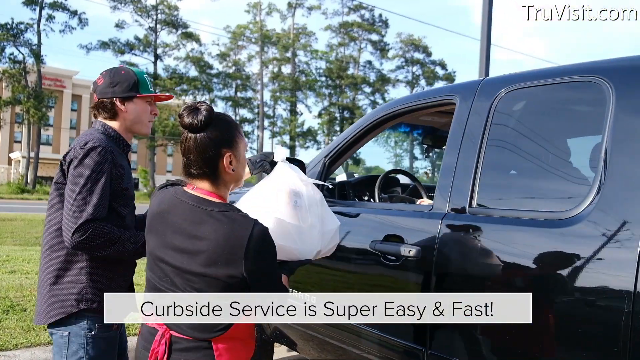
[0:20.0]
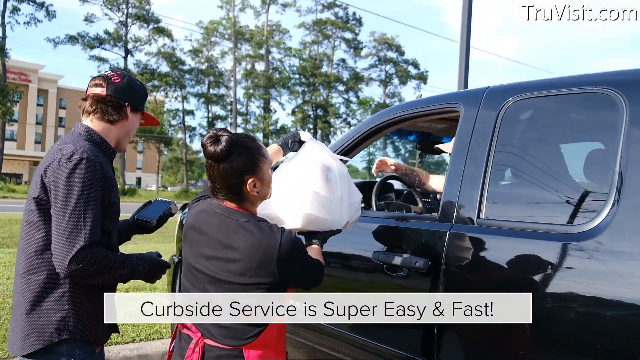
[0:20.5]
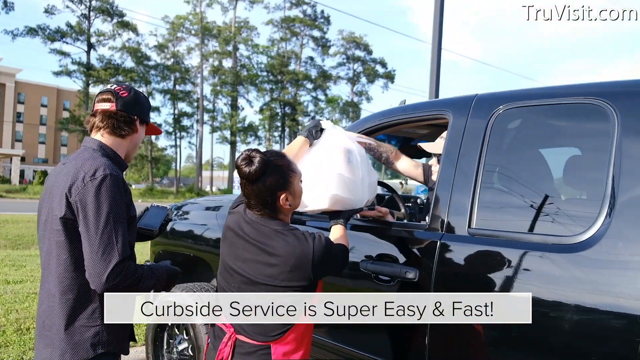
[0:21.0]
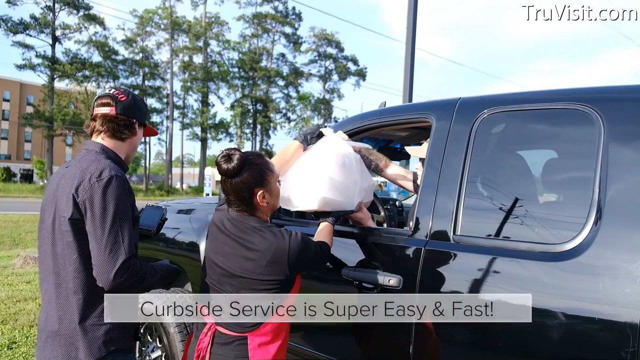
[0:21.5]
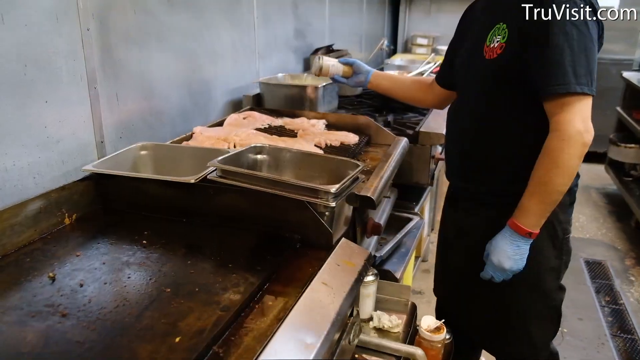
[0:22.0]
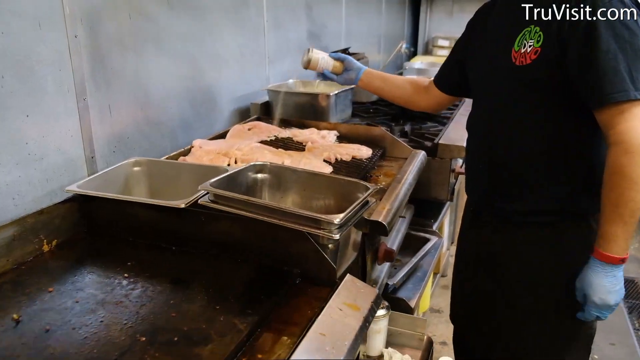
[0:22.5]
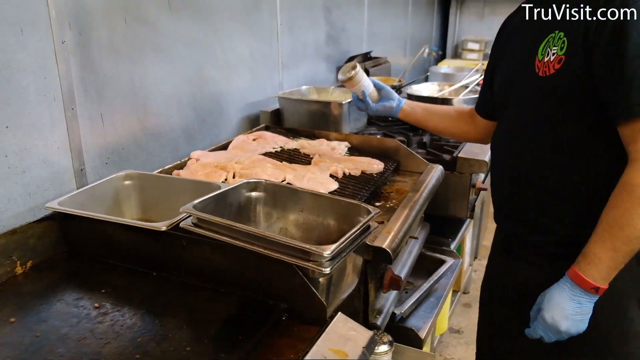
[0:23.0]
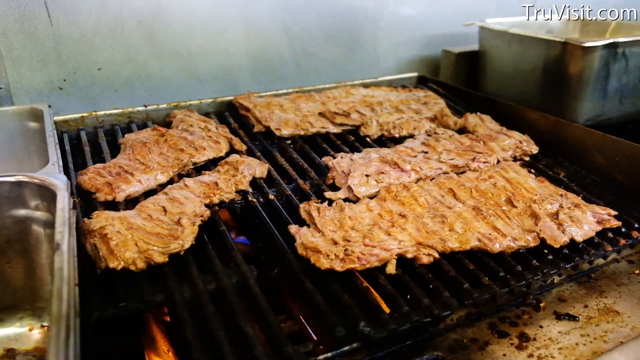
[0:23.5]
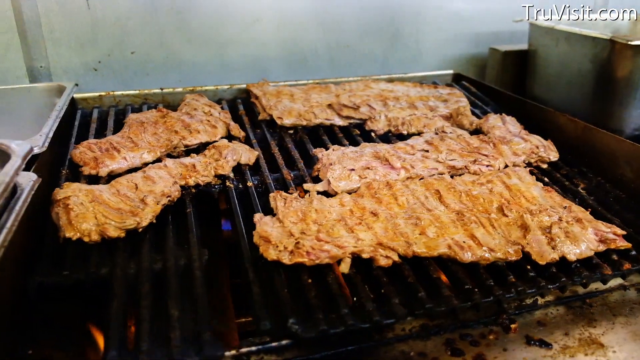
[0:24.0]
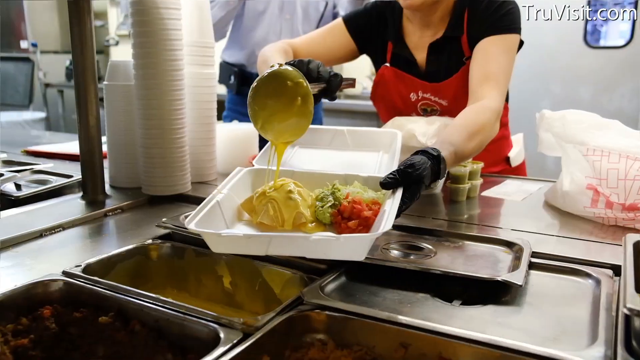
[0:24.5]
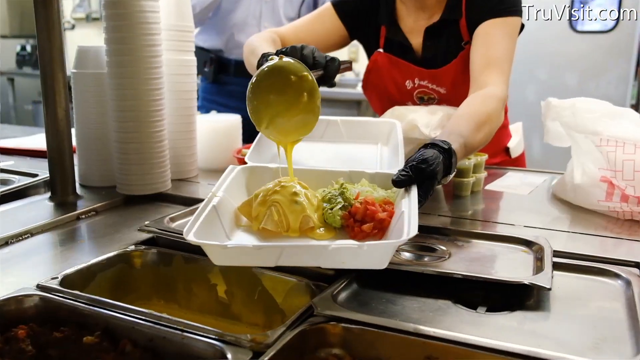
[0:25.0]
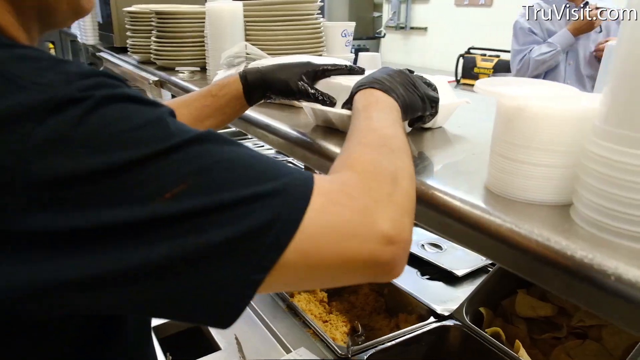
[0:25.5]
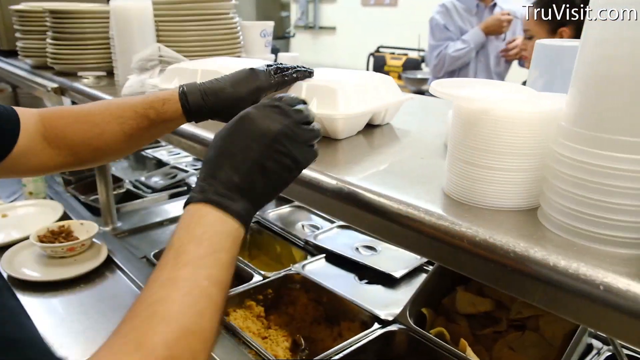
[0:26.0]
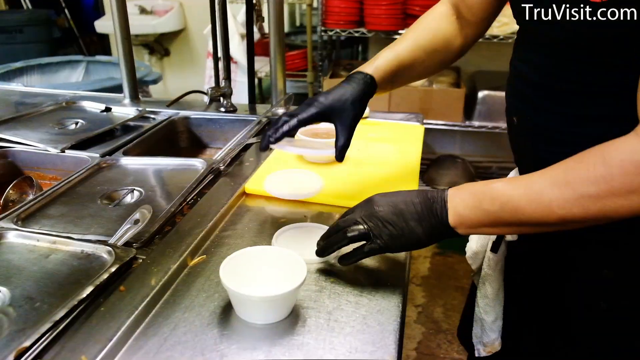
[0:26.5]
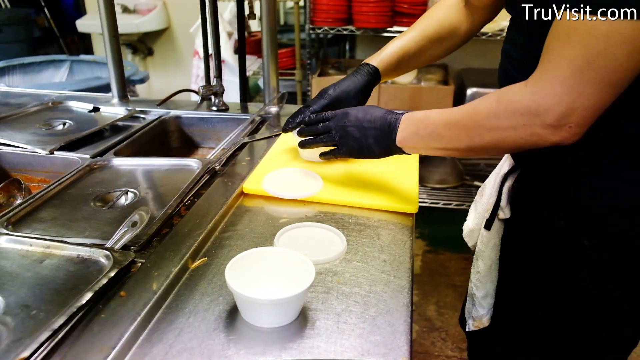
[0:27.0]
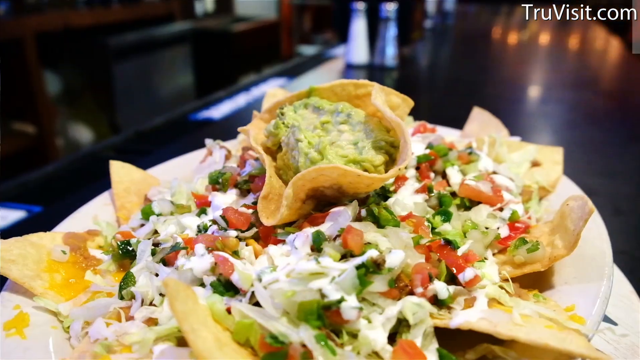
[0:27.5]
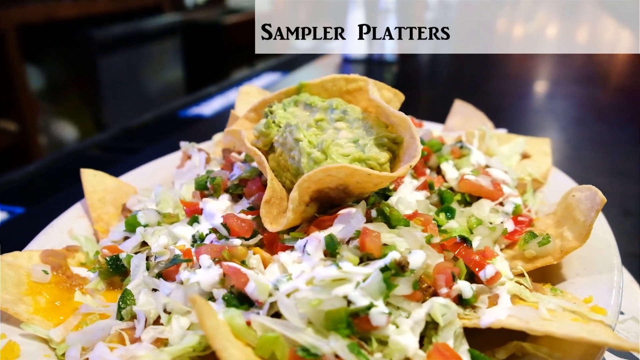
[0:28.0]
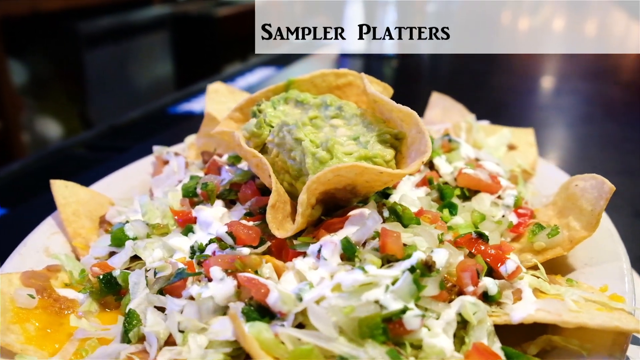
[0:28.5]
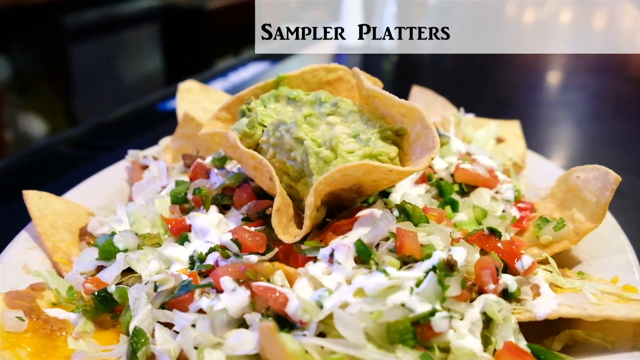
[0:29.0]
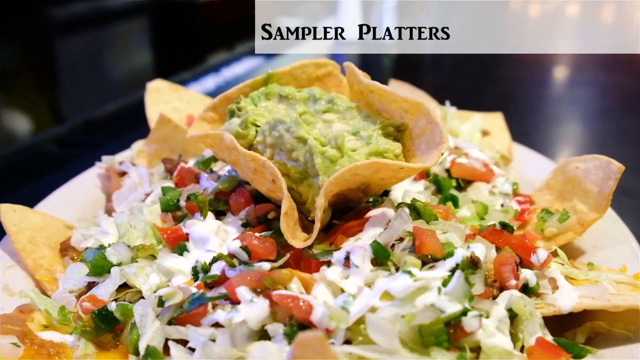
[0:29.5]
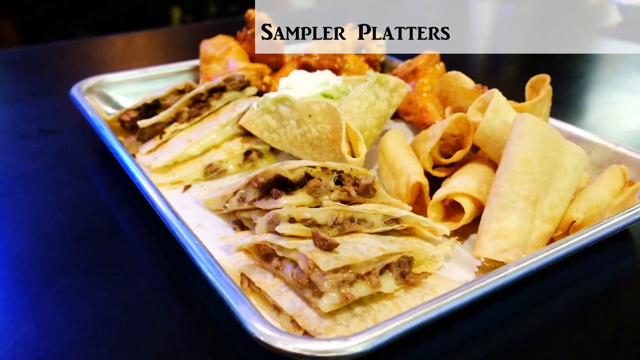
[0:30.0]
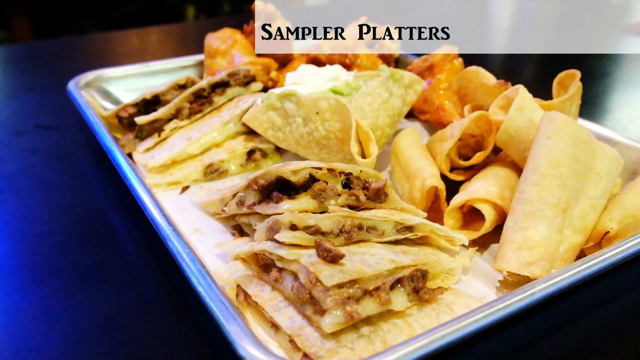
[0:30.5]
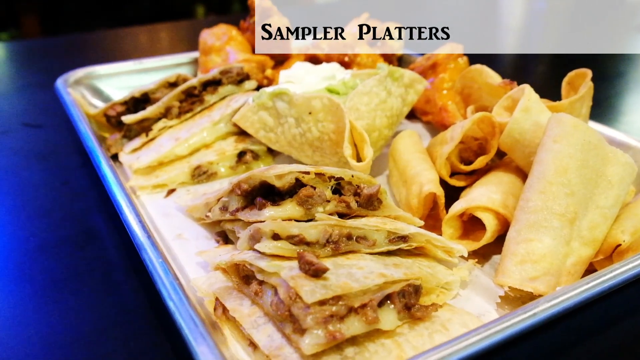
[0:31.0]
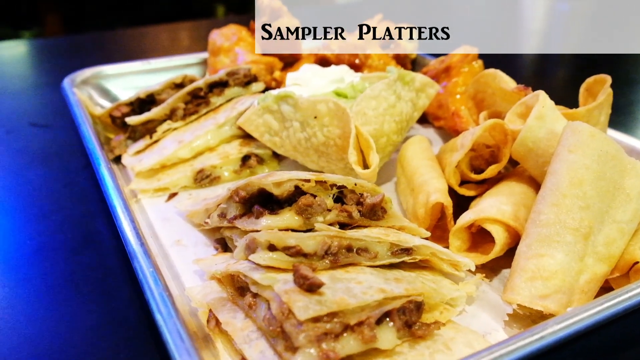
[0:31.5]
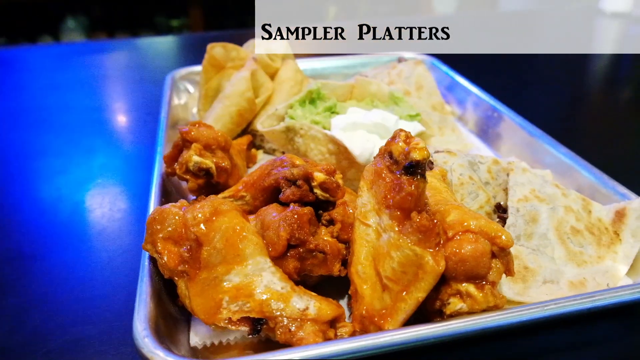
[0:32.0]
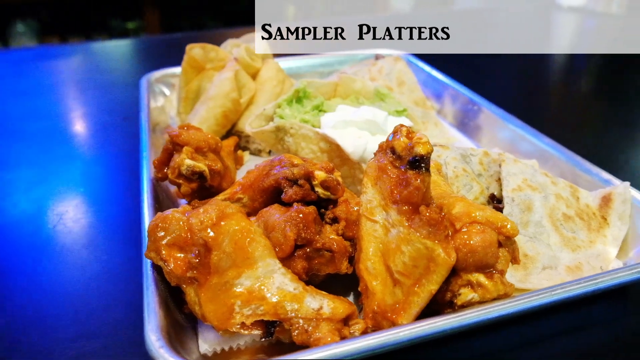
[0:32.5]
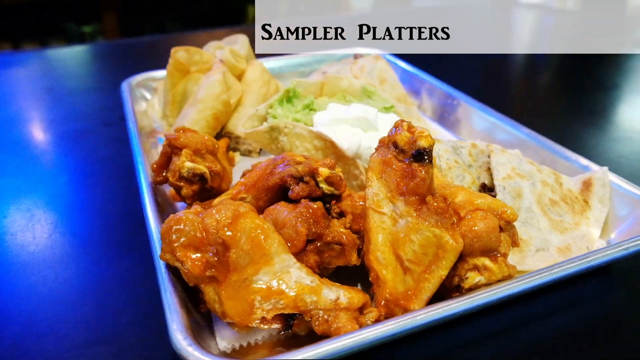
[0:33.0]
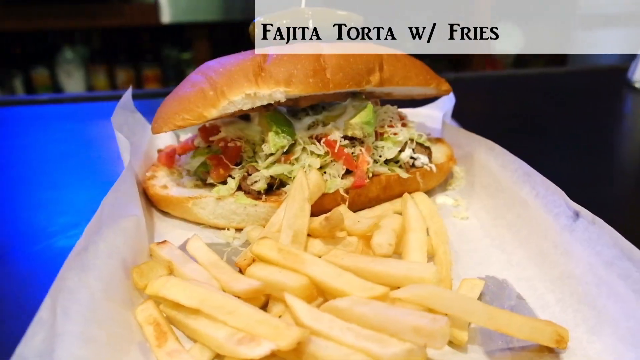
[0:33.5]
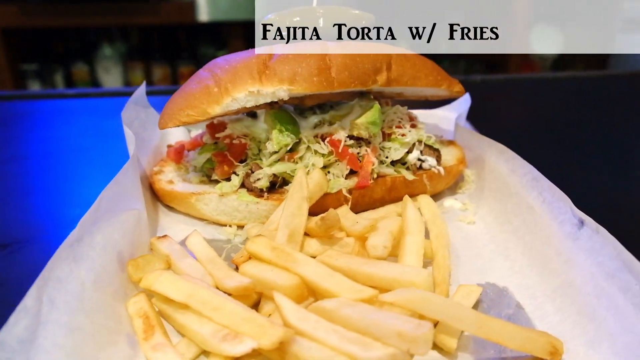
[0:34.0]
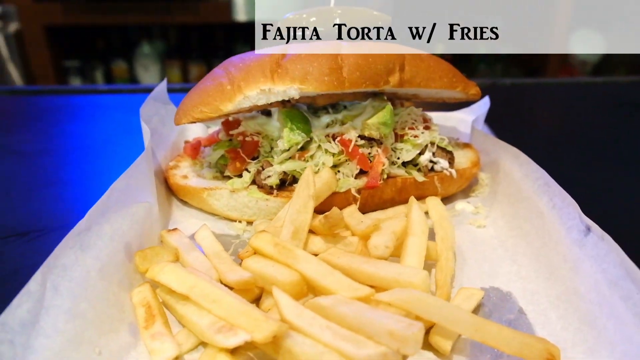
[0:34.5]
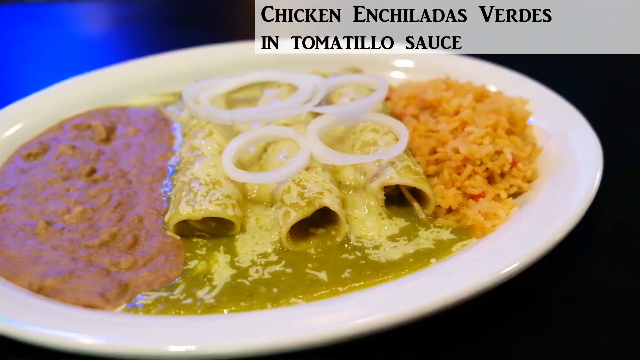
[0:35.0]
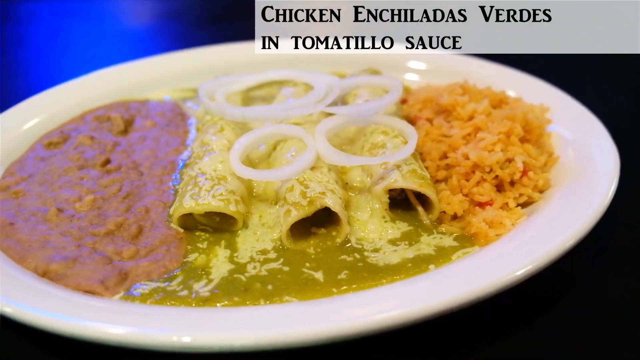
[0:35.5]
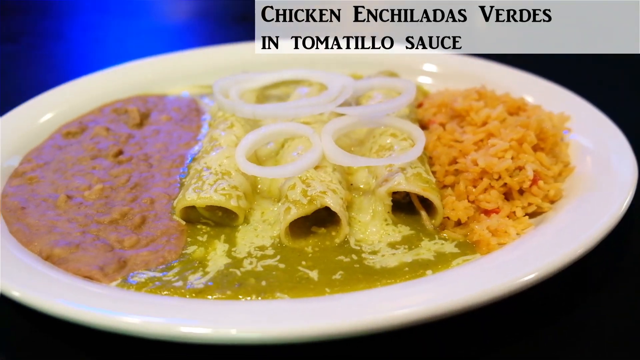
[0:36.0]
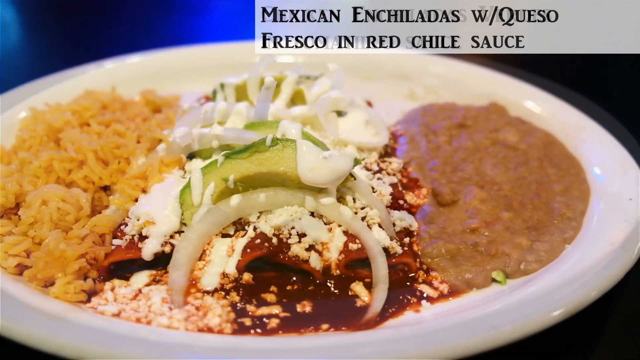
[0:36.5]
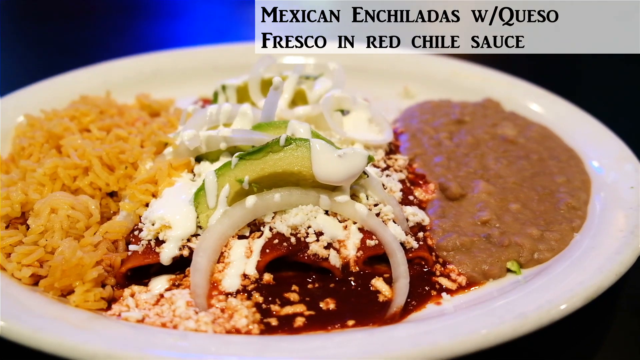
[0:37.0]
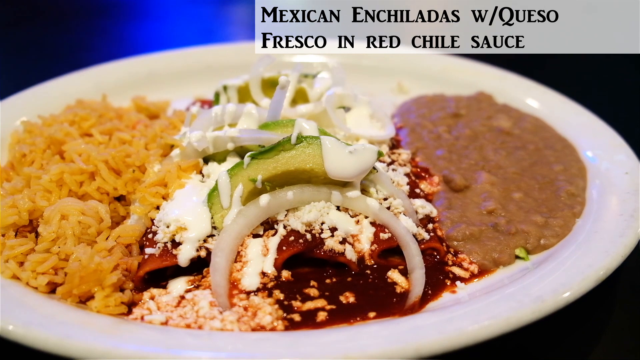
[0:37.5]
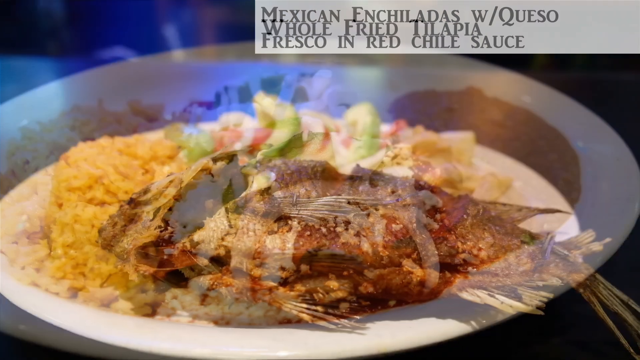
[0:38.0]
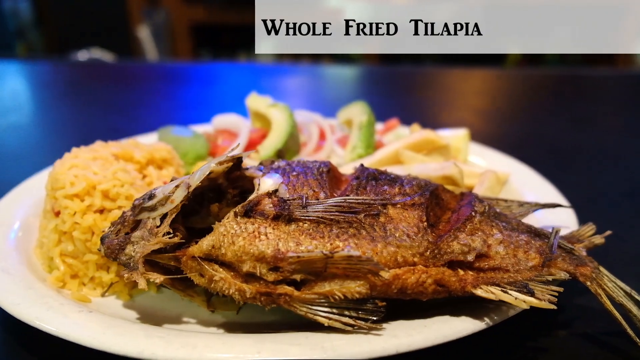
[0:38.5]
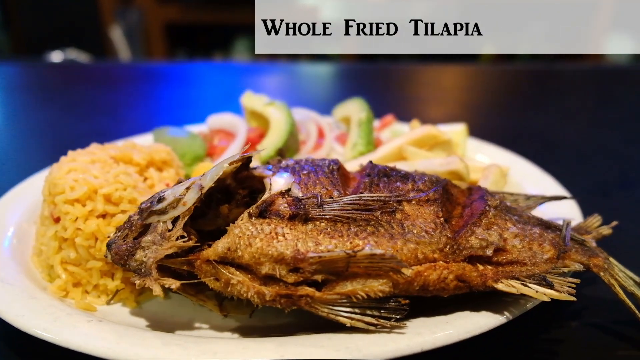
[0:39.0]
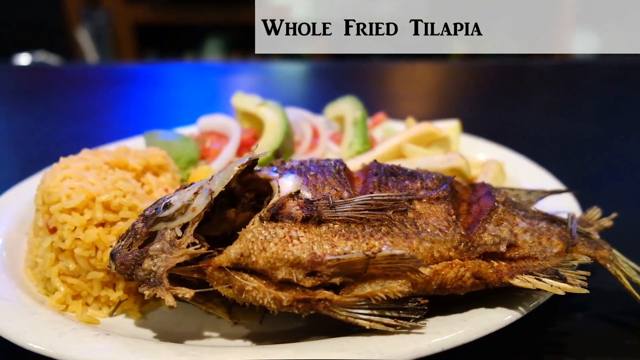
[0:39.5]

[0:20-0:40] On-screen text reads "curbside service is super easy and fast." Two employees are outside; a female employee passes the bagged to-go order to a customer in a black truck with the window rolled down. She still has on the black gloves she put on while preparing the meal, and the employee who took the order is out there as well. The view then moves to the back of the kitchen, where it looks like meats on the grill are being seasoned. Another employee has what looks like another to-go order in a white styrofoam box and puts cheese sauce on an order, and other to-go orders are being prepared and put in styrofoam containers. Text on the screen reads "sampler platters" as several dishes are shown. The first looks like some type of nacho dish, with guacamole, nachos around the dish, tomatoes, lettuce and some cheese. Next is what looks kind of like a quesadilla with guacamole and sour cream in the center, along with what kind of looks like wings and other things. A dish is labeled "fajita torta with fries," followed by chicken enchiladas verde in tomatillo sauce, Mexican enchiladas with queso frescos and red chili sauce, and a whole fried tilapia, each shown with the things that come with them.